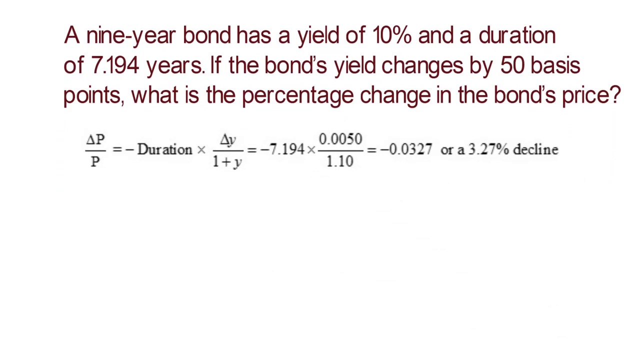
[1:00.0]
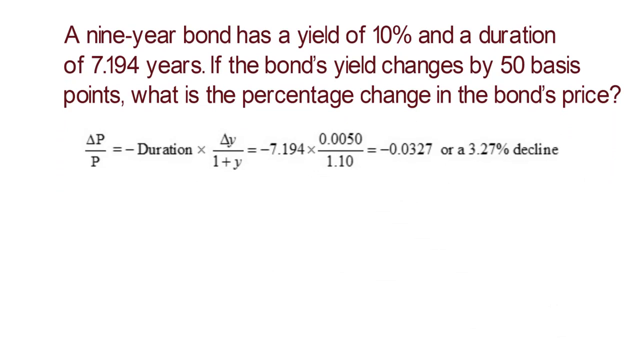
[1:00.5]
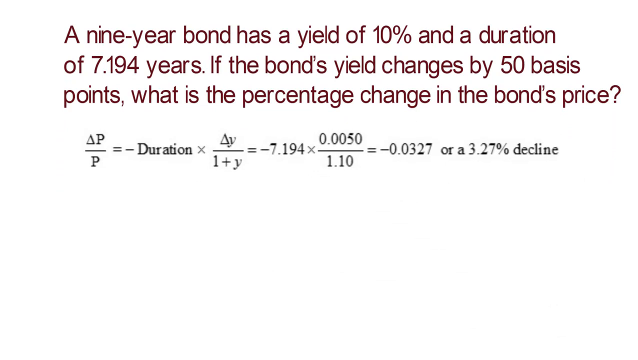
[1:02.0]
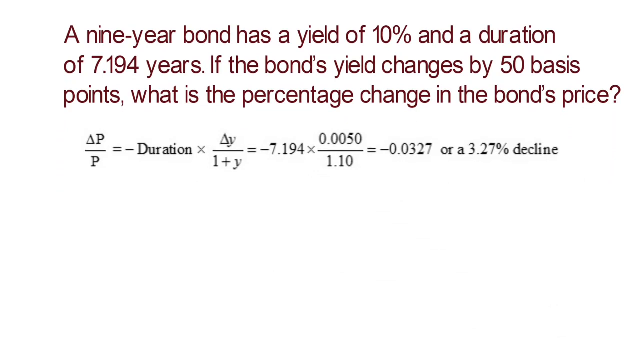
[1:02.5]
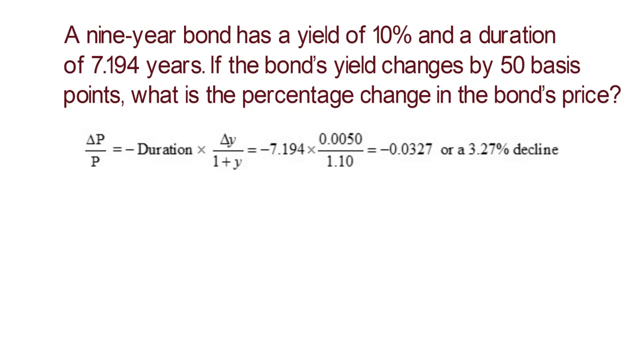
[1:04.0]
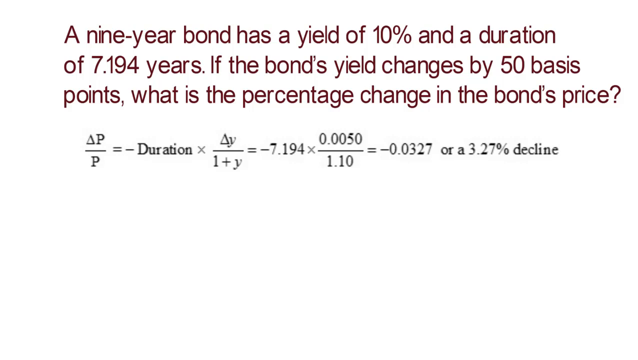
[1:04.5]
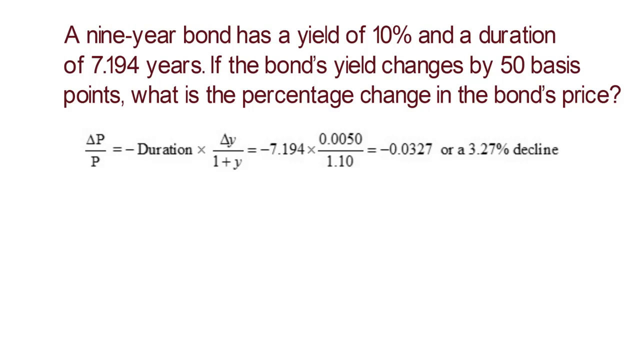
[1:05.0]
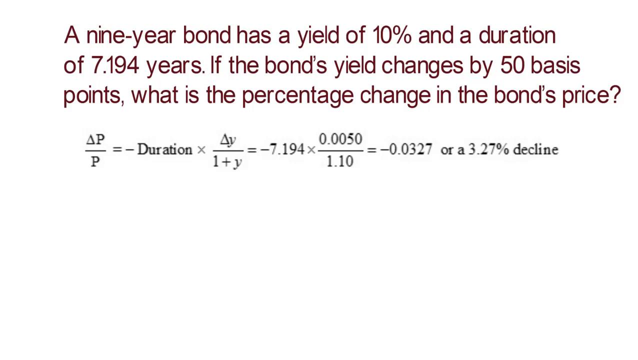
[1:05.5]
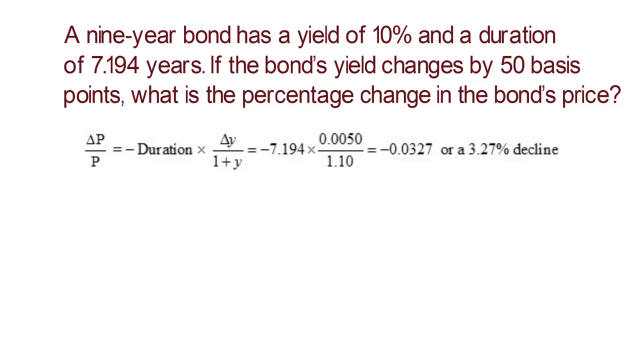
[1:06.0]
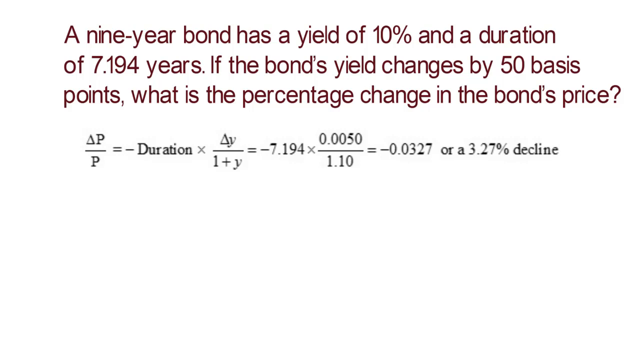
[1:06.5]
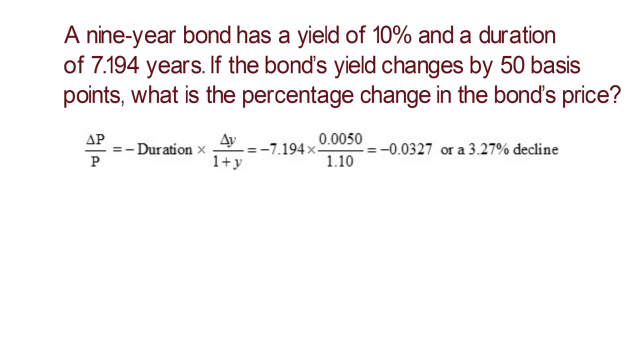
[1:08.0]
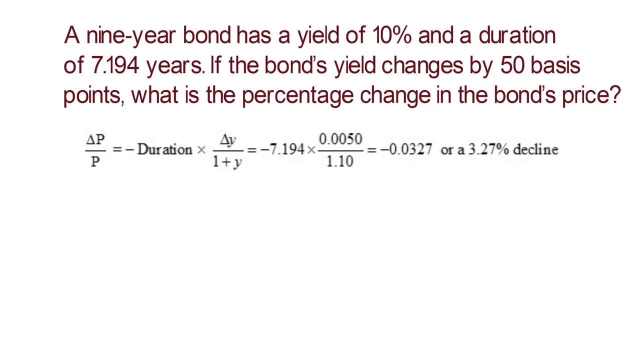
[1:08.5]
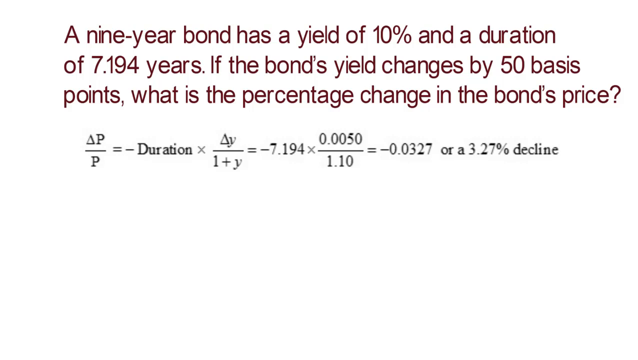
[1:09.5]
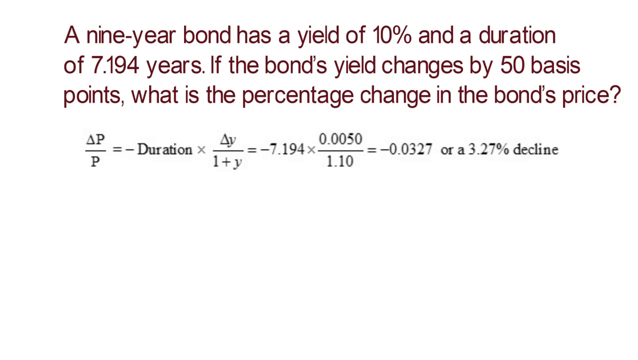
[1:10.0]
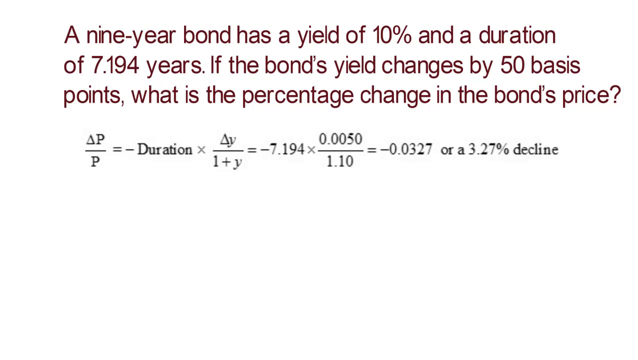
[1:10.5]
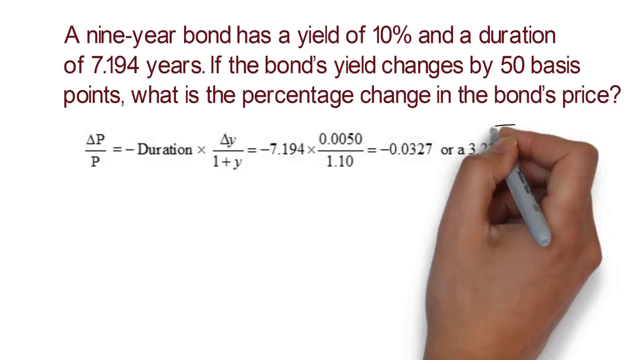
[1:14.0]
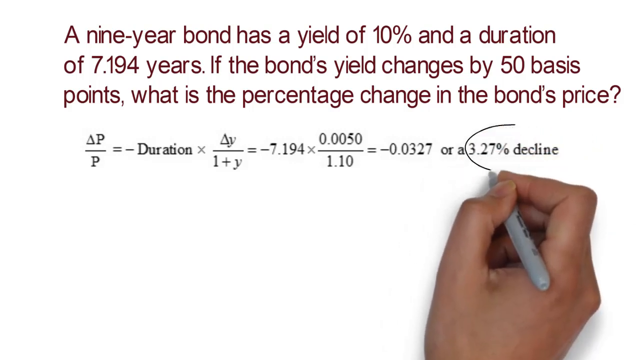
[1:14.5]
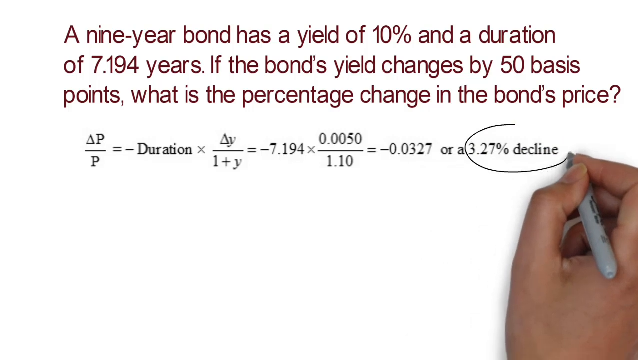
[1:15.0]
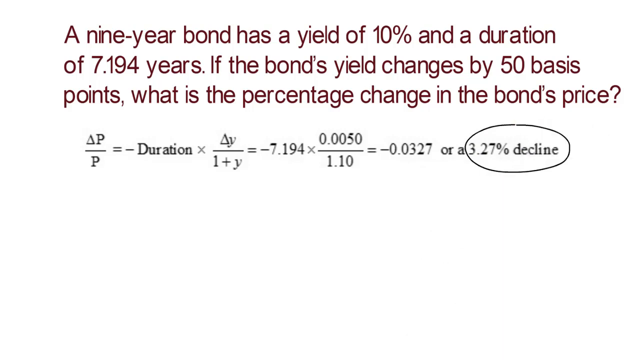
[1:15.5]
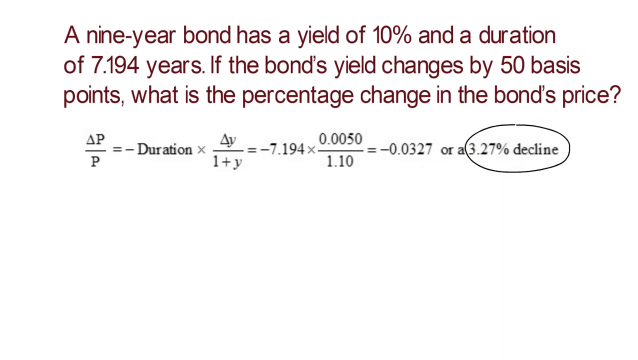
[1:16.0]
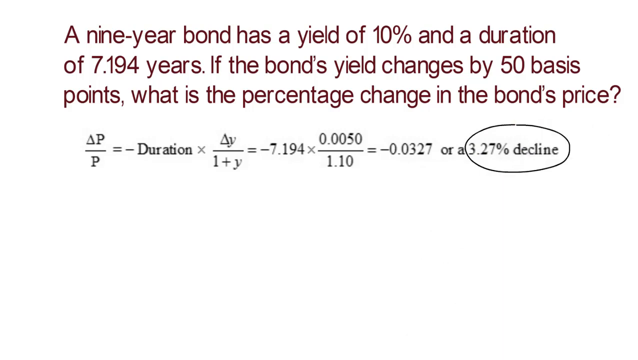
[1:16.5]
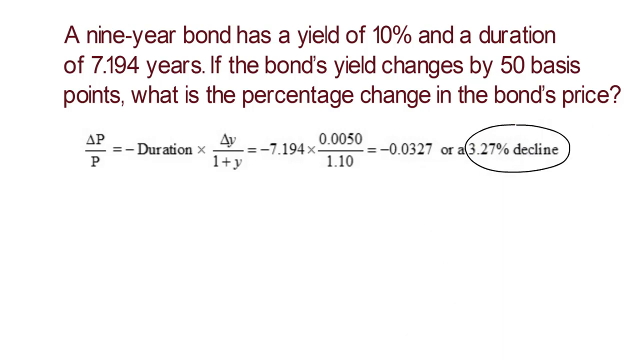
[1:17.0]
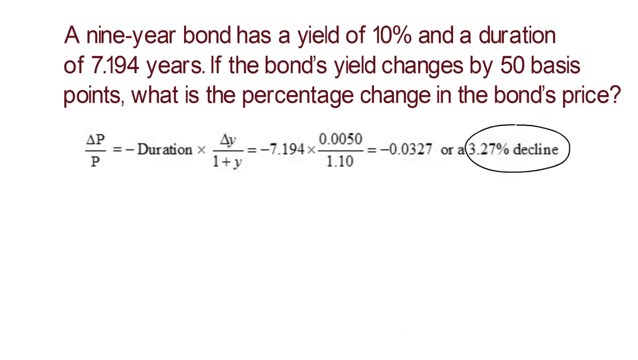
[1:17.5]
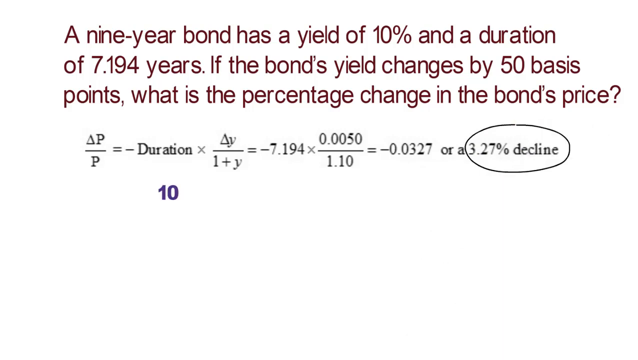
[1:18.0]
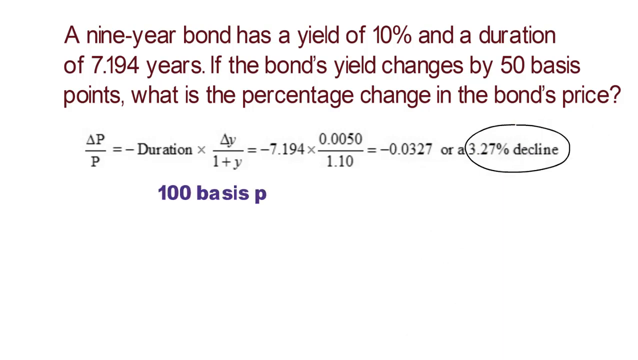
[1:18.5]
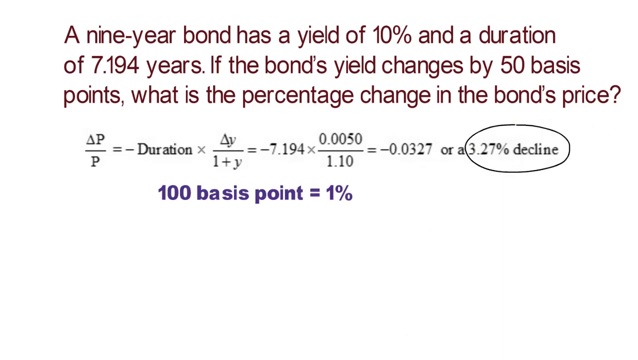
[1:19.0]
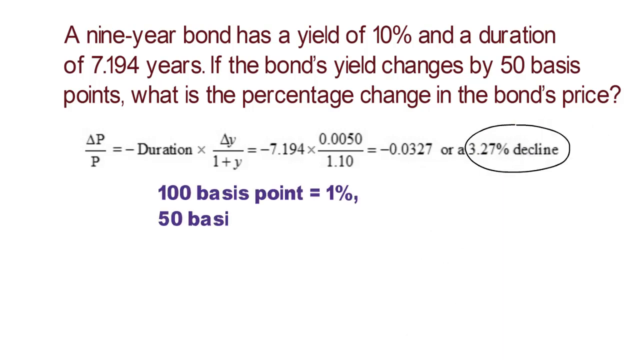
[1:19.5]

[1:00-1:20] The text about the bond's yield of 10% and its duration continues to be shown, asking the viewer what the percentage change is, along with the formula for calculating it. A hand holding a sharpie appears on screen and circles the 3.27% decline. Only the hand is visible, with no full person or animal, and the setting stays on this one page containing the question and the formula. The screen is then held for a bit.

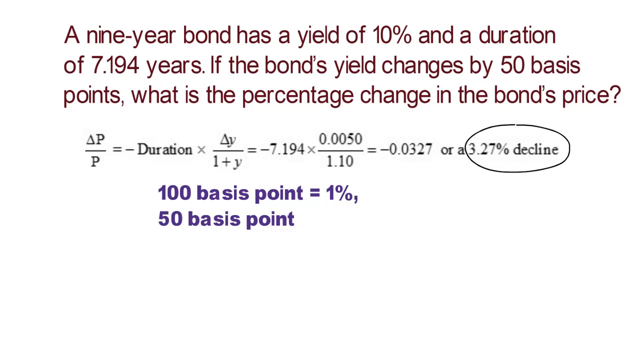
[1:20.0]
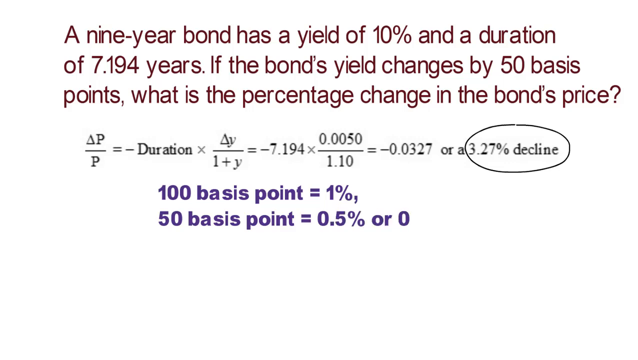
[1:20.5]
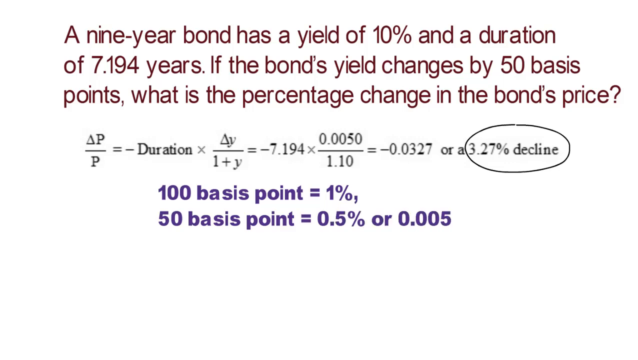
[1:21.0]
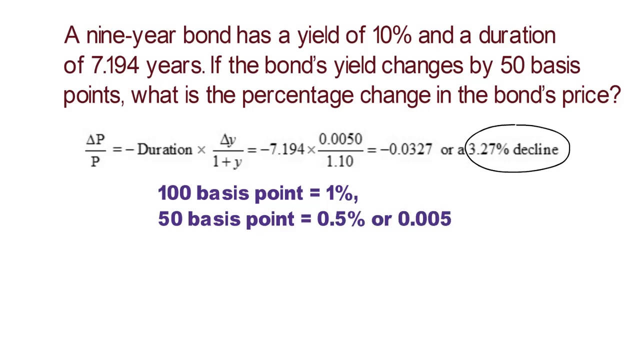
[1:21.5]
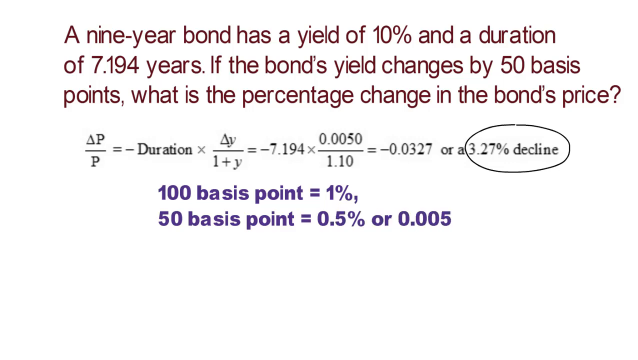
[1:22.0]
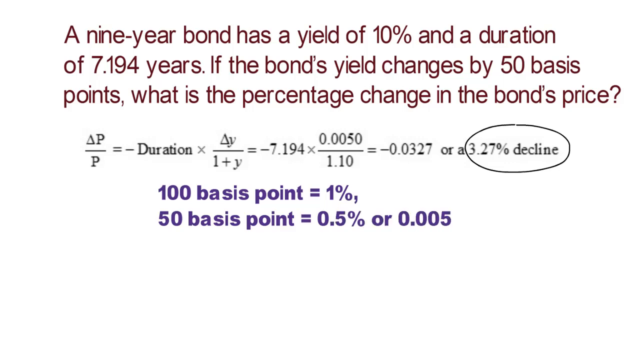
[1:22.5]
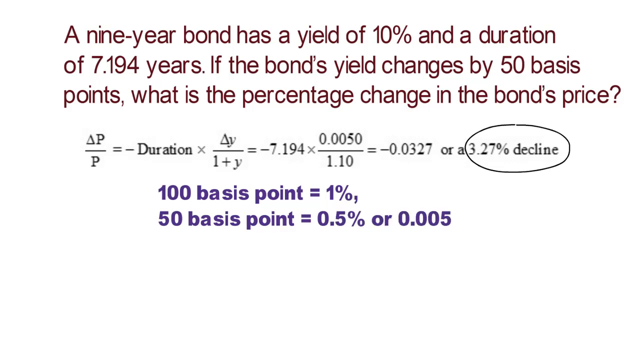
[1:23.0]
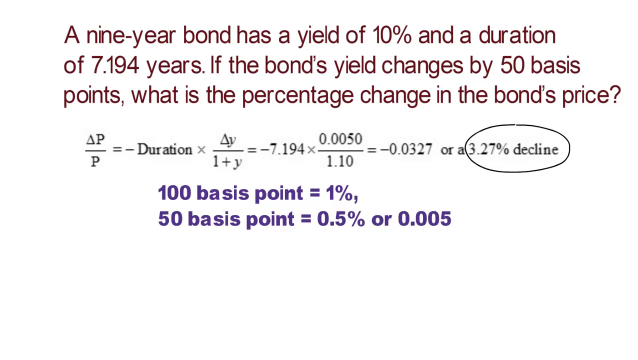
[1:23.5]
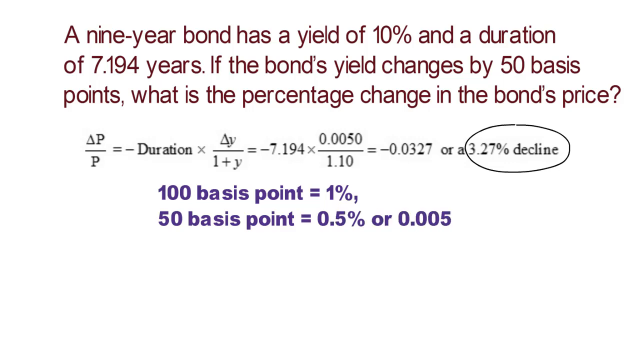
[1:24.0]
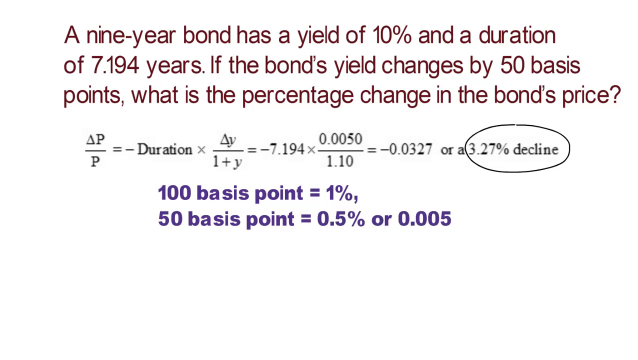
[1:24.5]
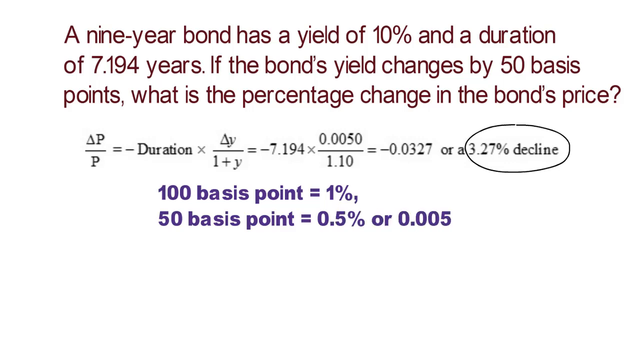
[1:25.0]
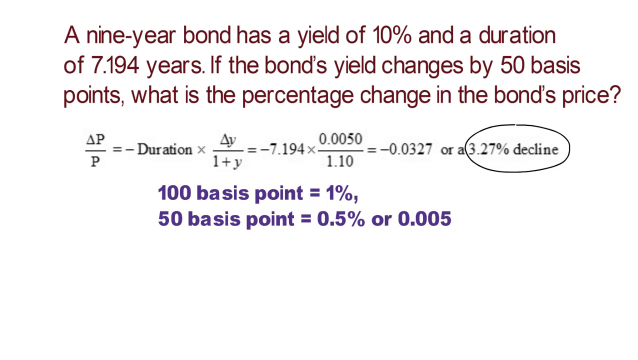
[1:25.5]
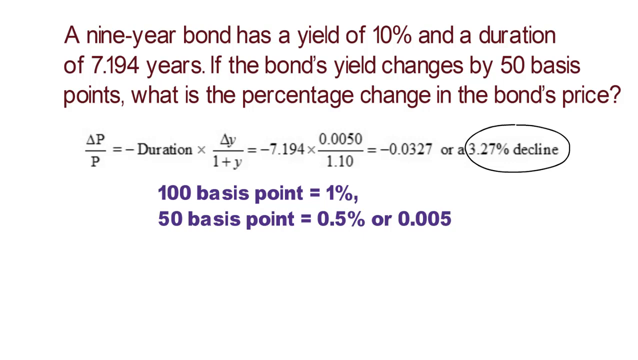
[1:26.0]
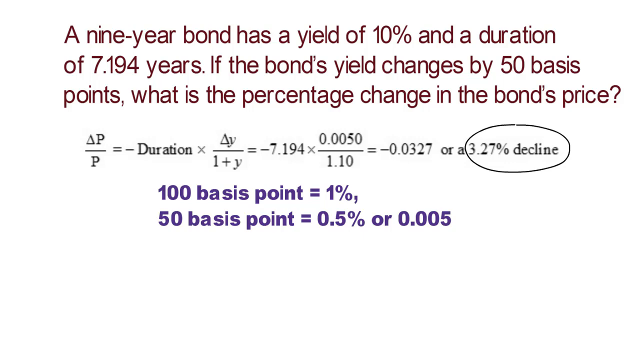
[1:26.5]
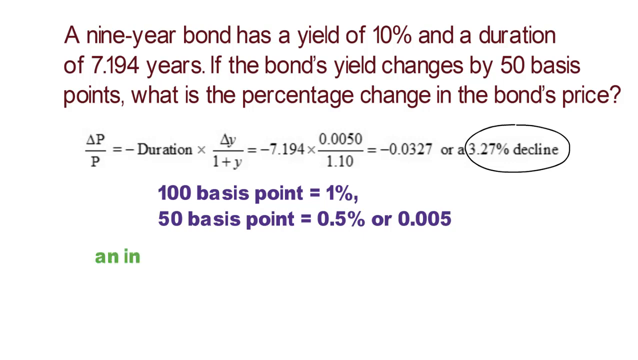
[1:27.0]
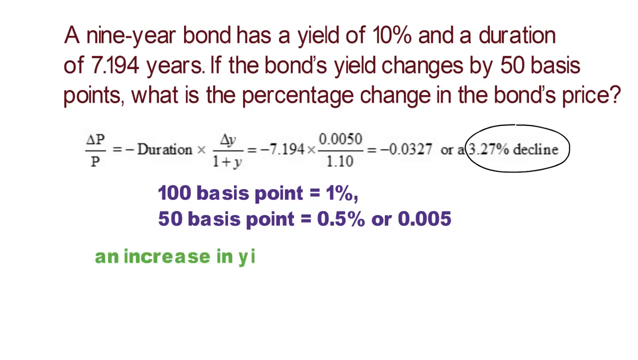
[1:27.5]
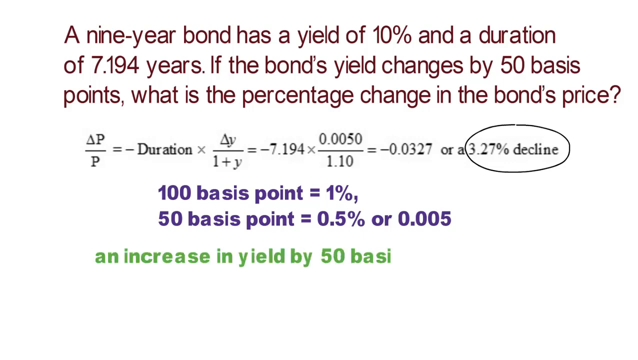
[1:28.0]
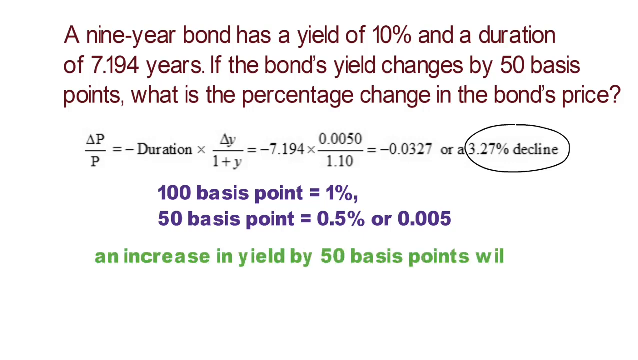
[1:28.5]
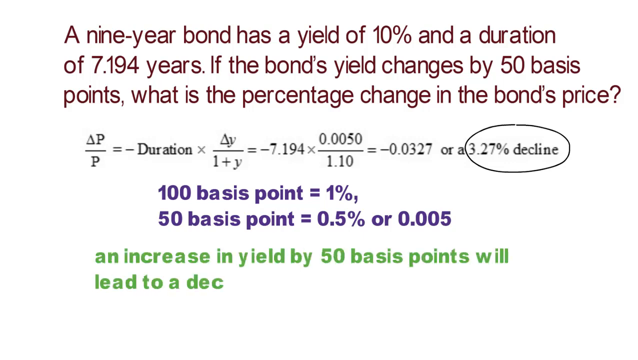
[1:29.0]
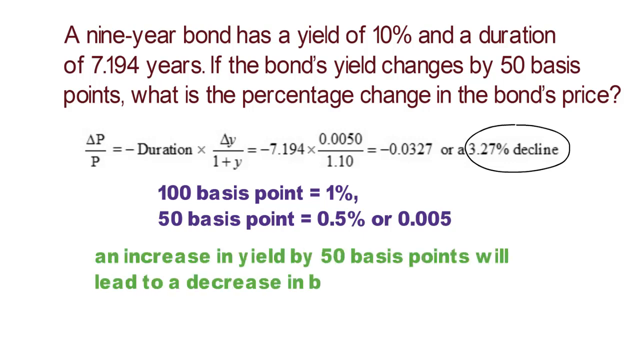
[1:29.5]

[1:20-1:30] The 3.27% decline remains on screen as more text appears on the white background. Purple text reads "100 basis points equals 1%, 50 basis points equals 0.5% or 0.005". Green text appears underneath, reading "an increase in yield by 50 basis points will lead to a decrease in bond prices", and is cut off as the shot ends. No people or animals appear; the page stays the same, changing only as new text appears.